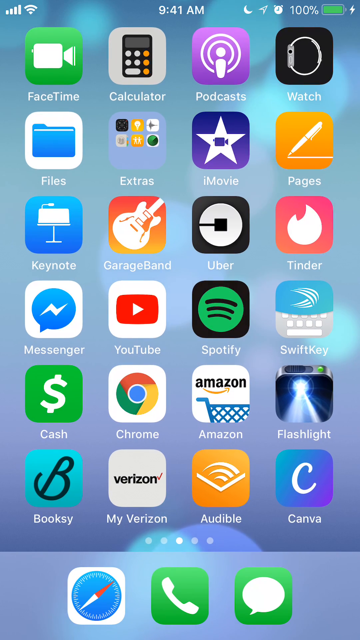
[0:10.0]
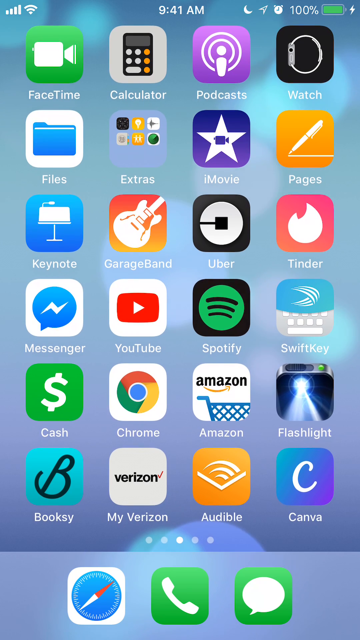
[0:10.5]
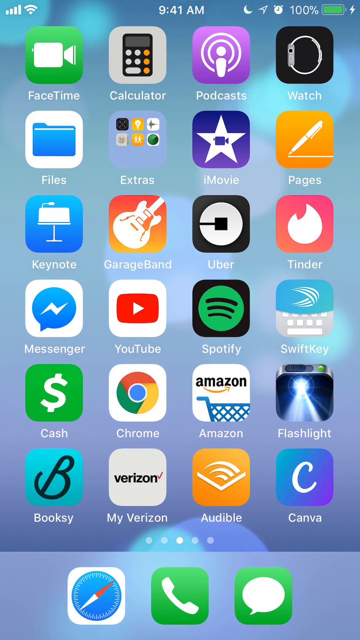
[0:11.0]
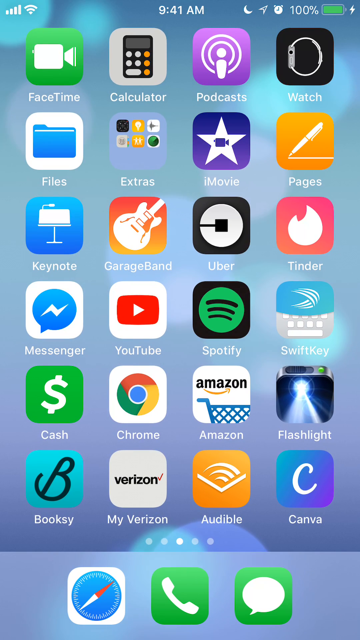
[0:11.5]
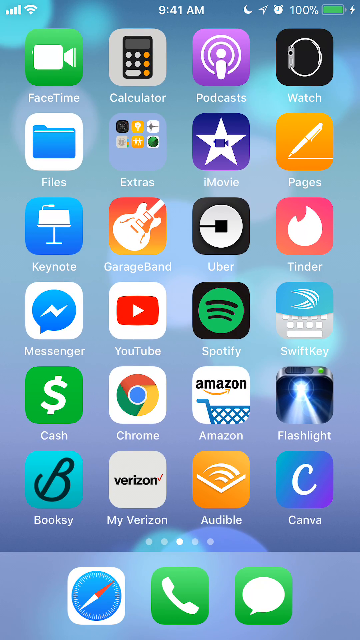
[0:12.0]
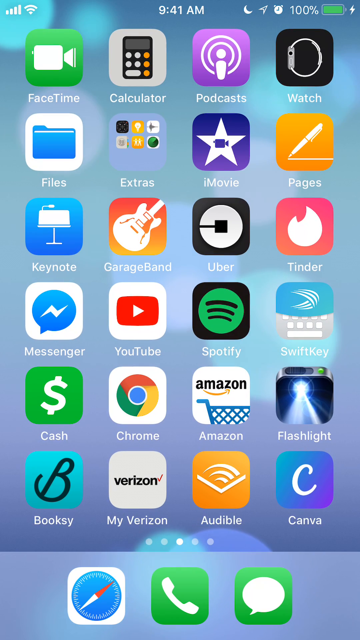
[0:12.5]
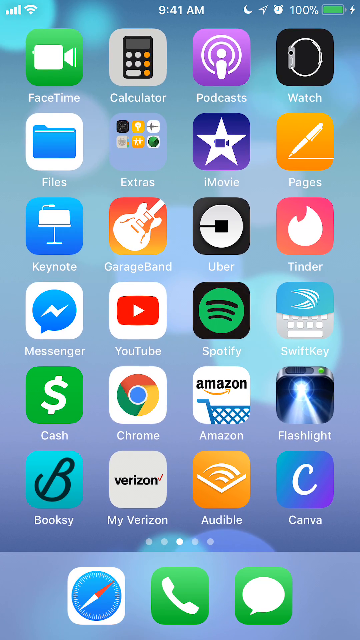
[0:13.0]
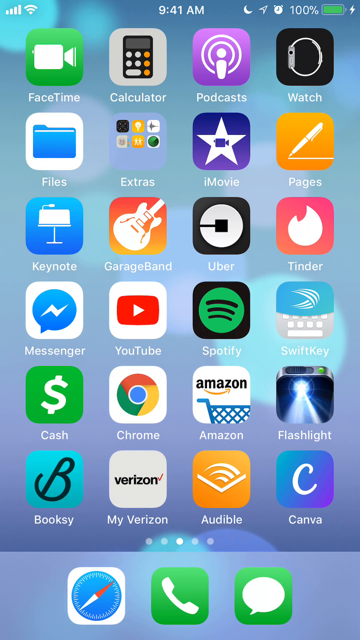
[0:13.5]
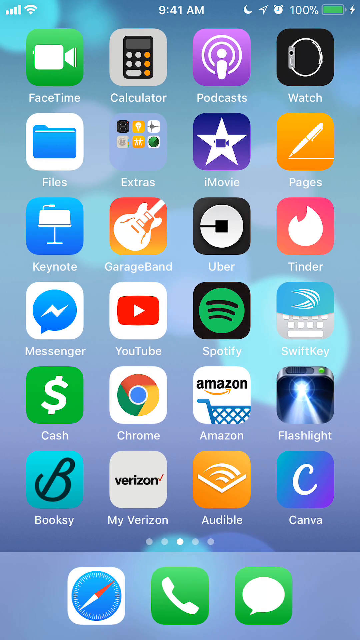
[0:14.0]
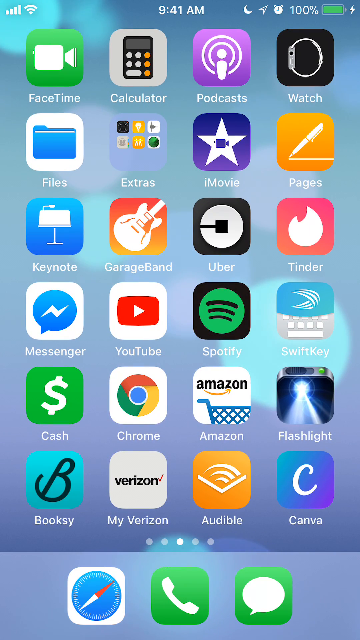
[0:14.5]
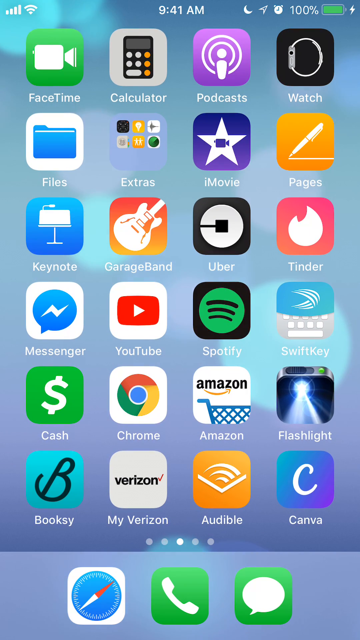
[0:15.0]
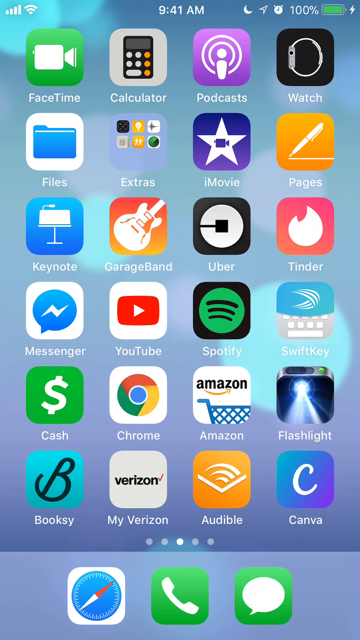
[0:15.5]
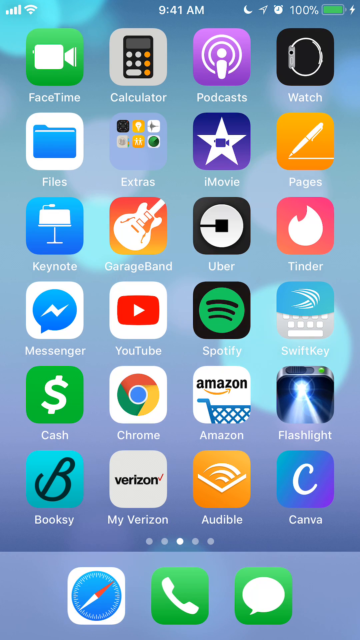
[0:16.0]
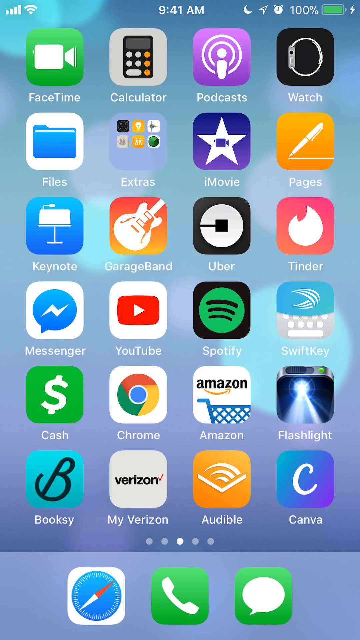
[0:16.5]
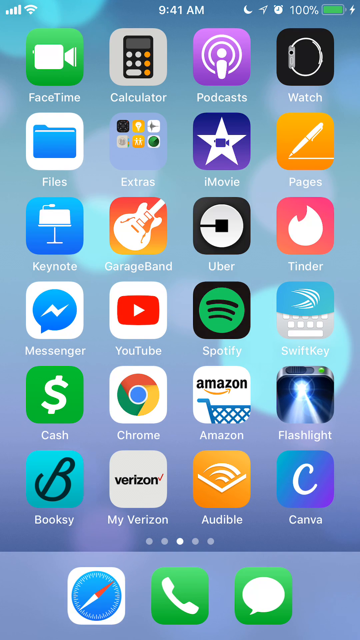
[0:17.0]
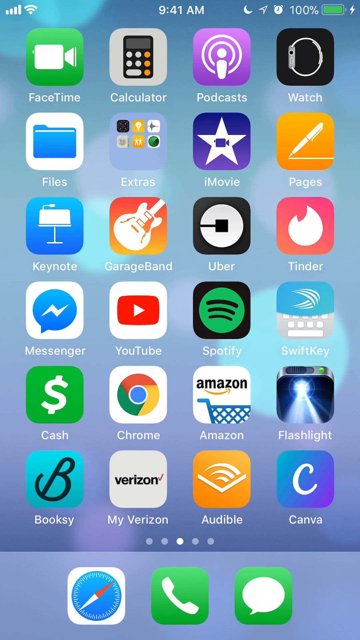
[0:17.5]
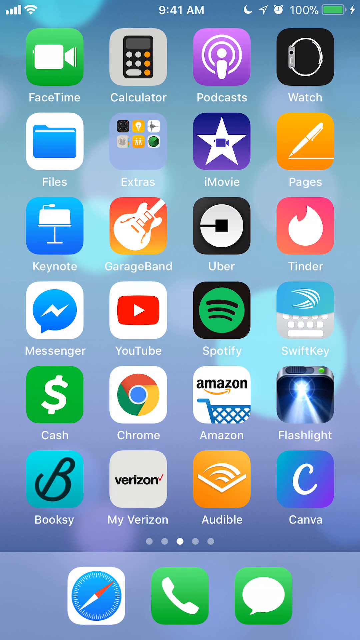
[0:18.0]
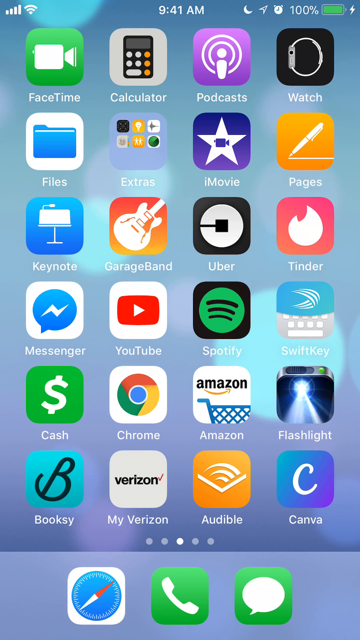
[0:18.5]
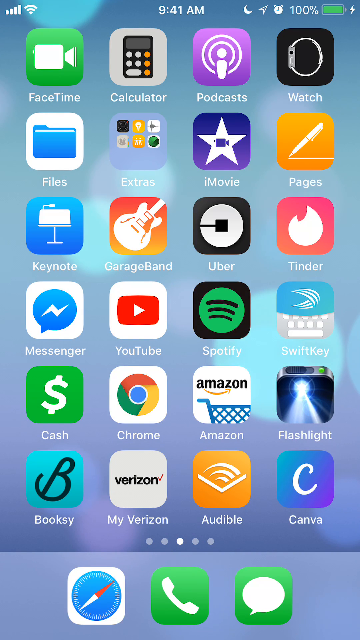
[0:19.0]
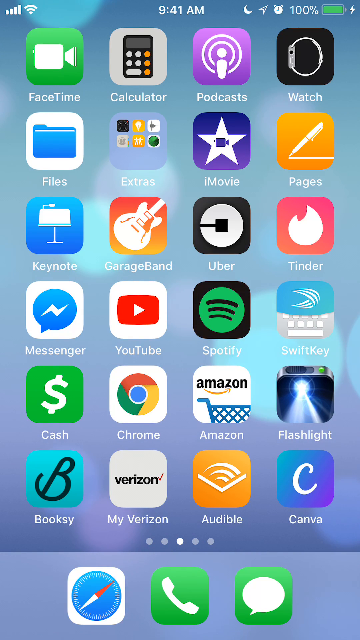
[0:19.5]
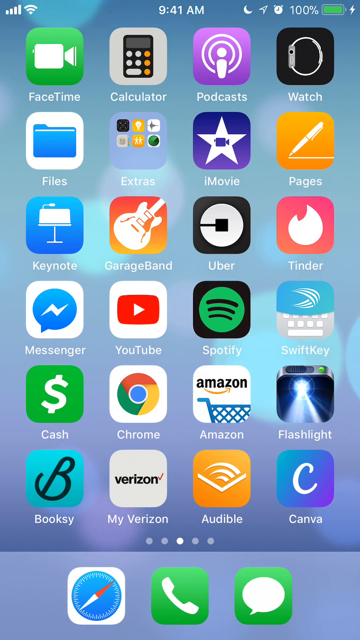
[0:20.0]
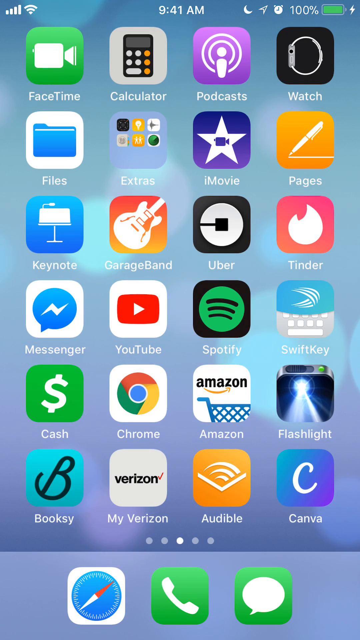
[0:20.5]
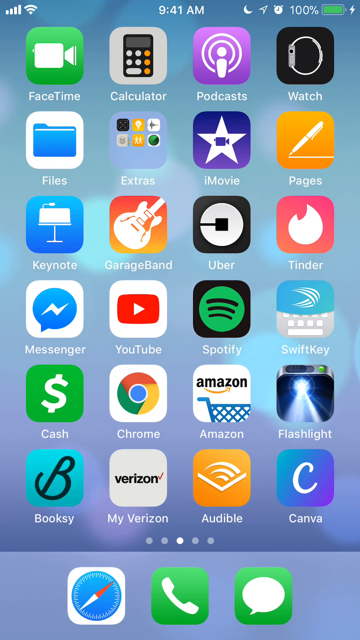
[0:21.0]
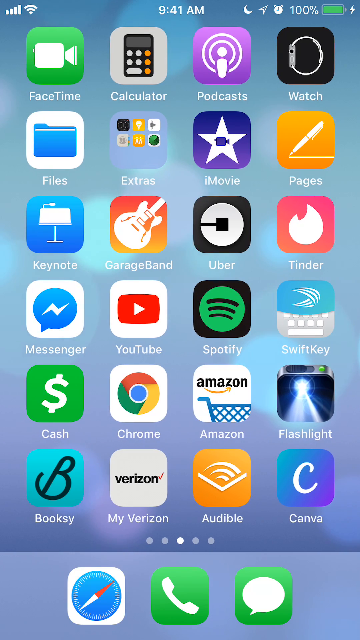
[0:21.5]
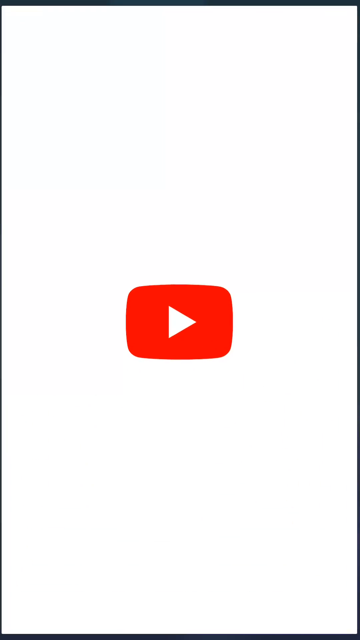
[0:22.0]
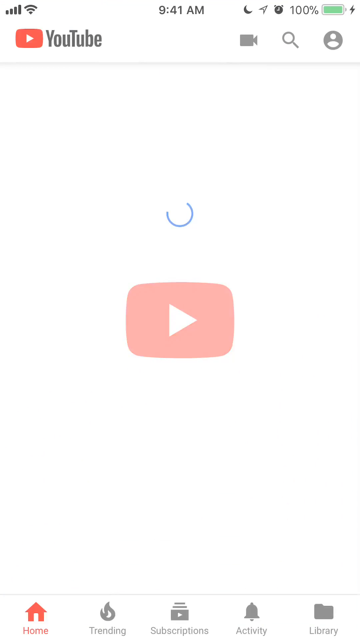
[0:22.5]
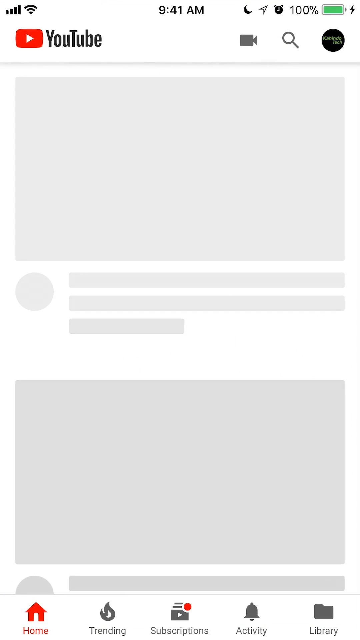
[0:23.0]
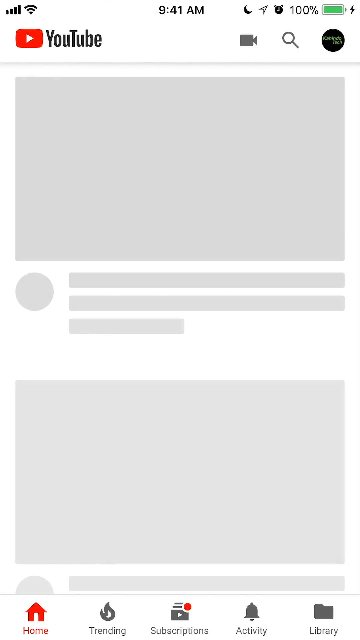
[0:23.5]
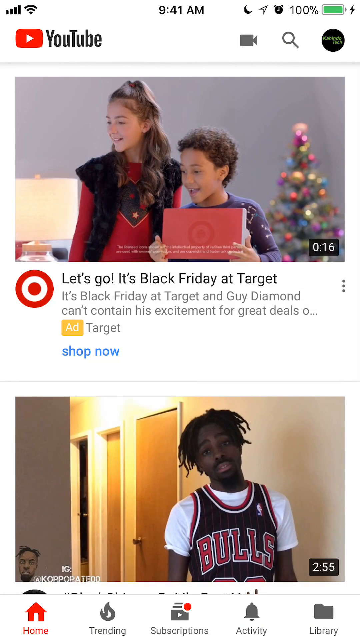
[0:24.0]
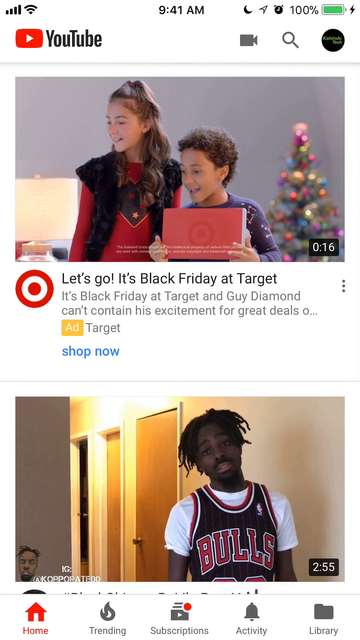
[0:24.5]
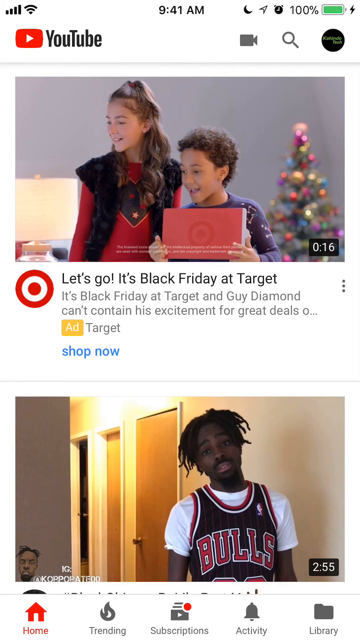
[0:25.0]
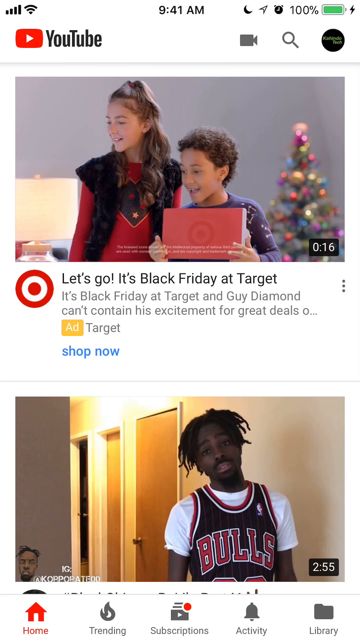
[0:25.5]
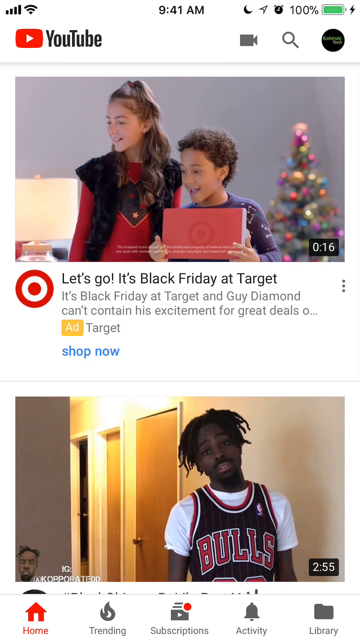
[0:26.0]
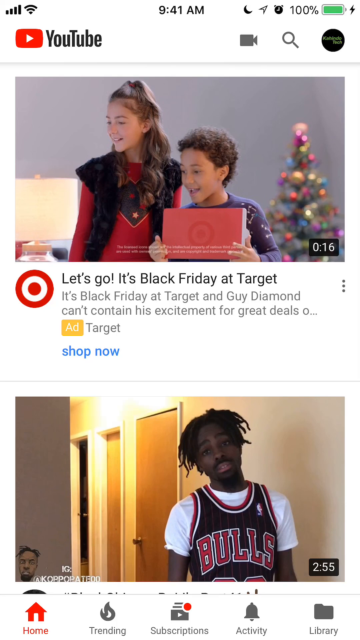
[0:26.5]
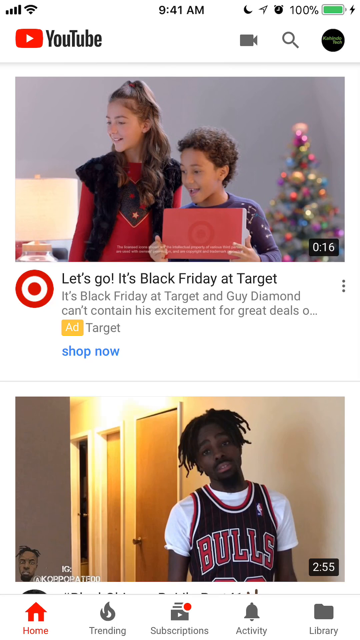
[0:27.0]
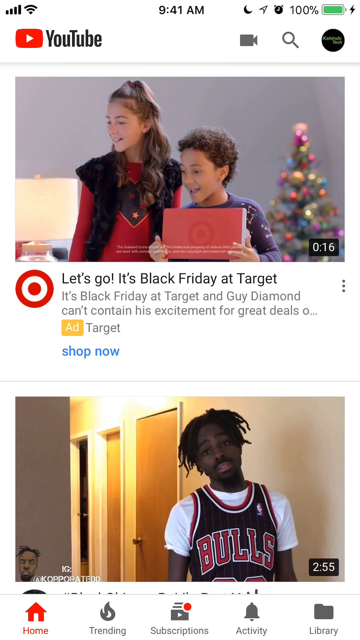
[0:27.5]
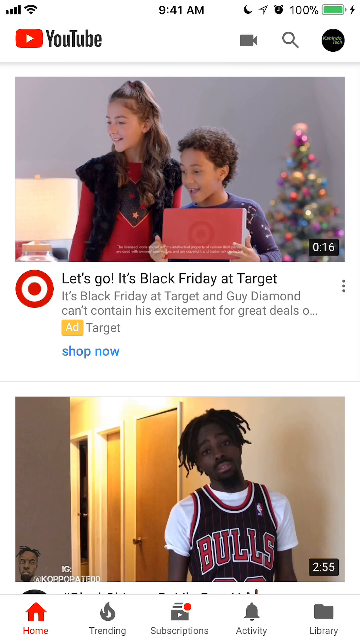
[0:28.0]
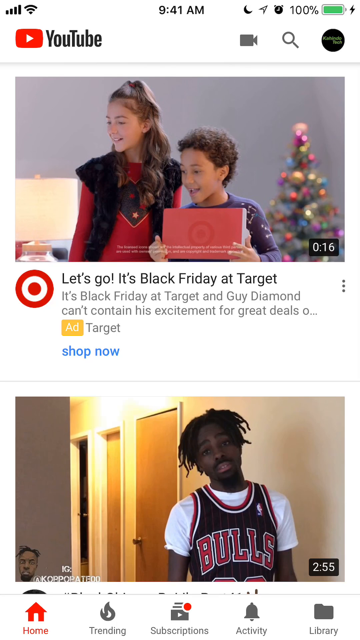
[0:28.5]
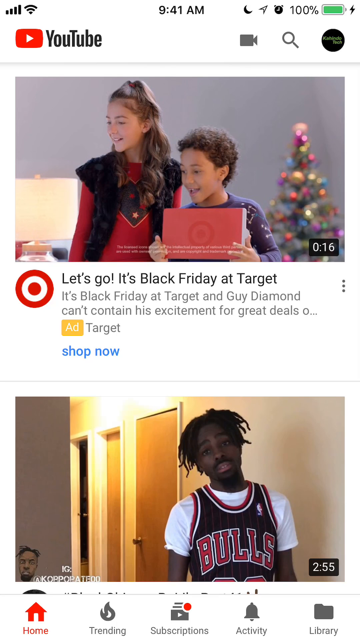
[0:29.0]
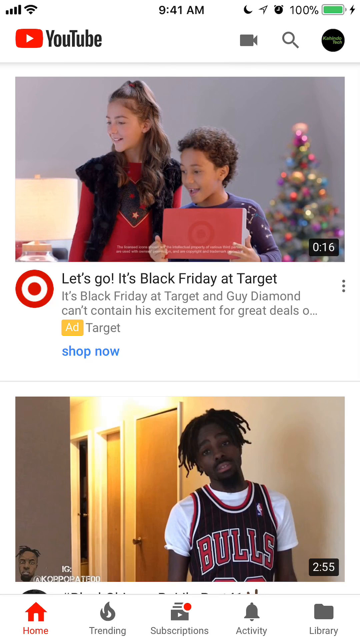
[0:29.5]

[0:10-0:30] A person using his iPad clicks the YouTube app. After YouTube opens, the status bar still shows the time as 9.41pm and the 100% indicator, and other controls are removed. The main part of the screen is an ad targeting Black Friday. The ad has a photo of two kids: a girl with long brown hair wearing a red shirt and a black vest, and a boy with short brown hair wearing a dark blue shirt. They are both holding red folders and smiling at the camera, and a decorated Christmas tree is visible behind them on the right. The ad text reads "Let's go, it's Black Friday, it's Target, it's Black Friday, it's Target", and the Target logo is displayed with the text. In the blue area of the ad there is a view of another video, with a thumbnail showing a young man with dark skin wearing a white shirt.